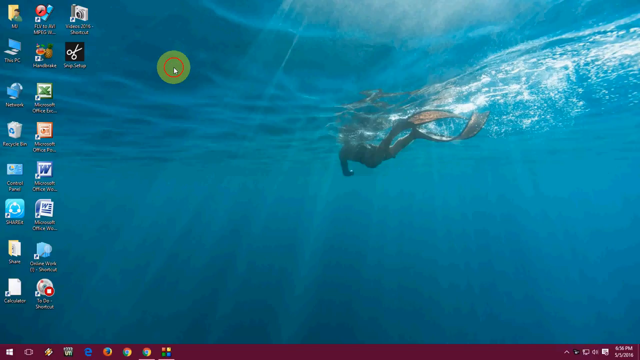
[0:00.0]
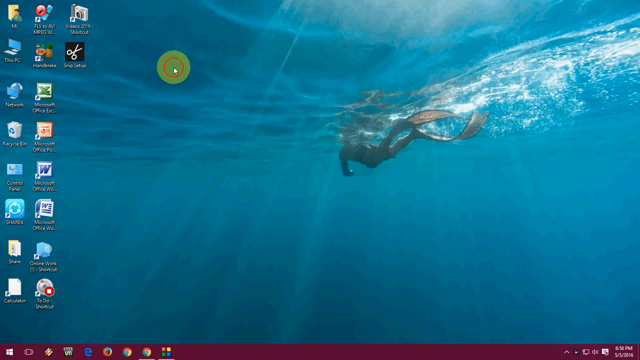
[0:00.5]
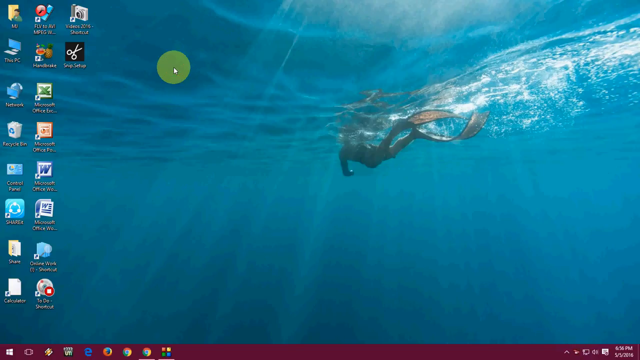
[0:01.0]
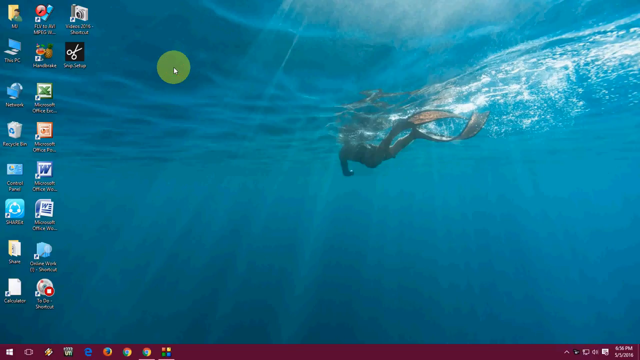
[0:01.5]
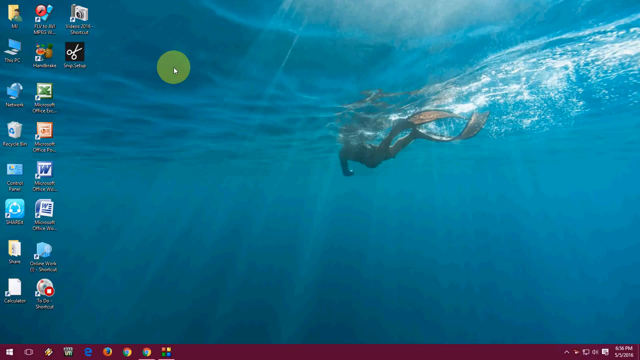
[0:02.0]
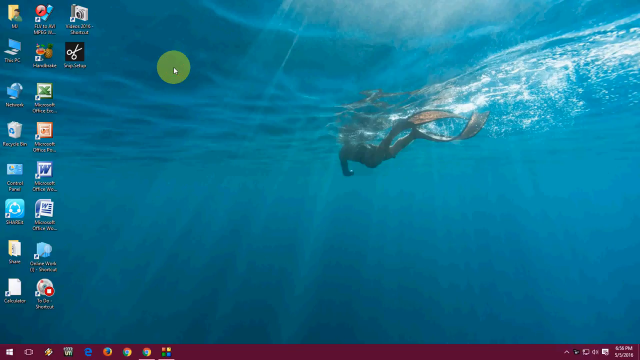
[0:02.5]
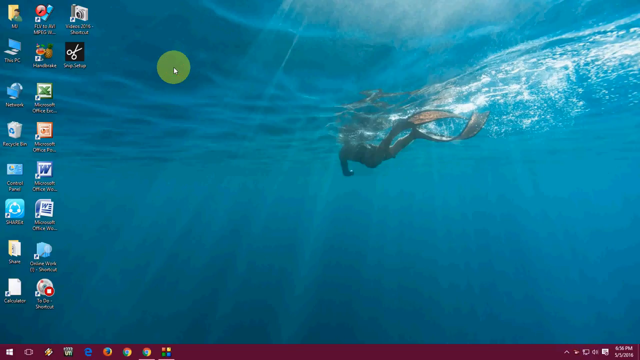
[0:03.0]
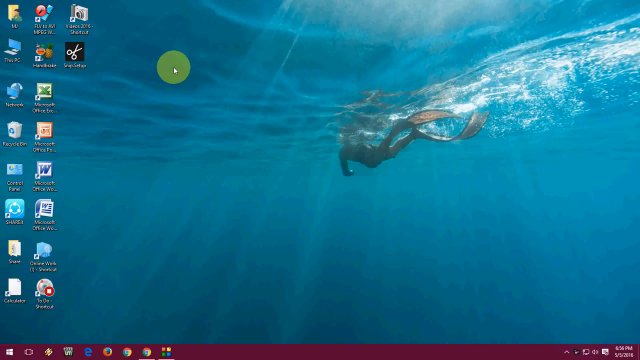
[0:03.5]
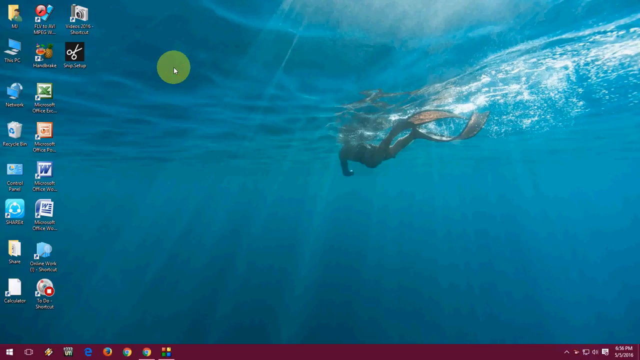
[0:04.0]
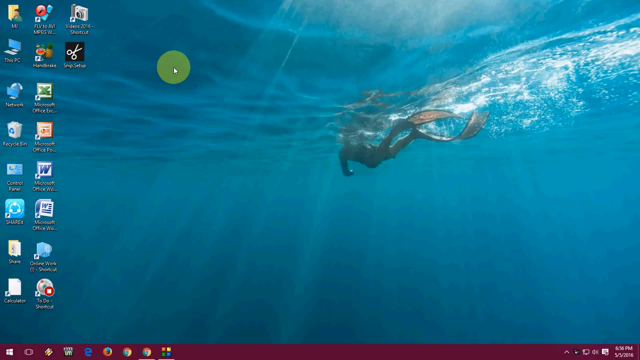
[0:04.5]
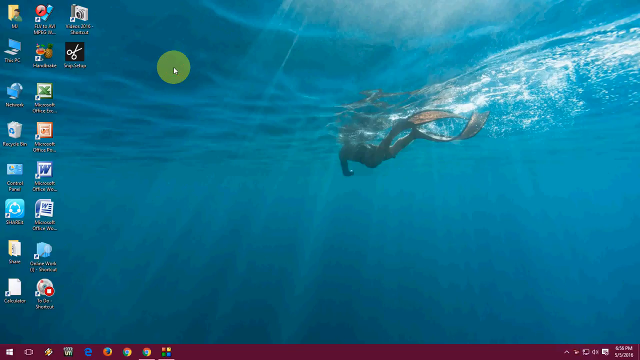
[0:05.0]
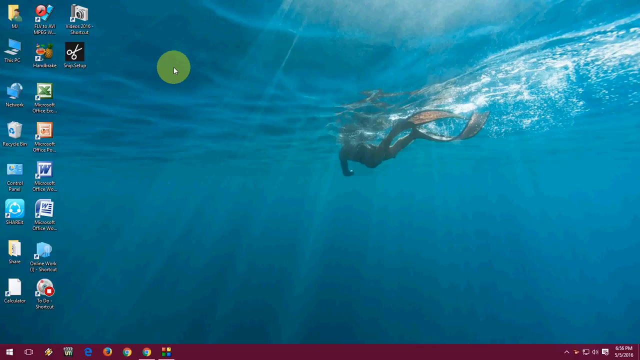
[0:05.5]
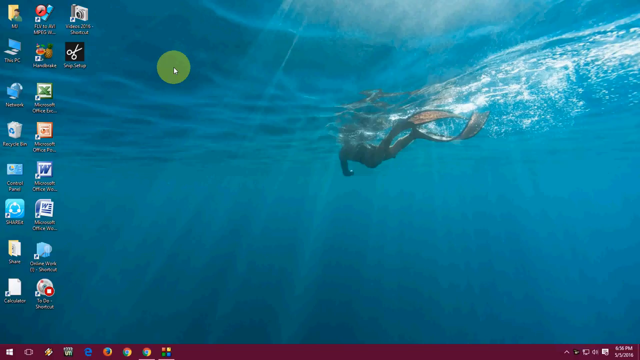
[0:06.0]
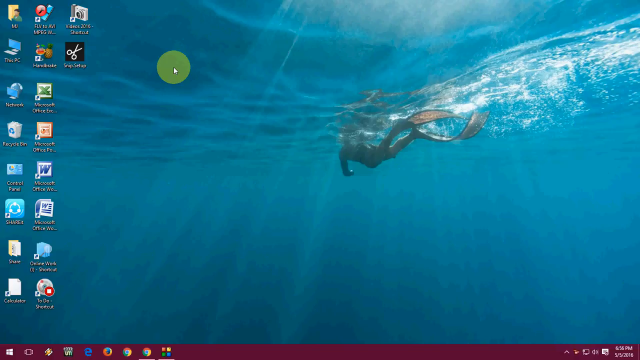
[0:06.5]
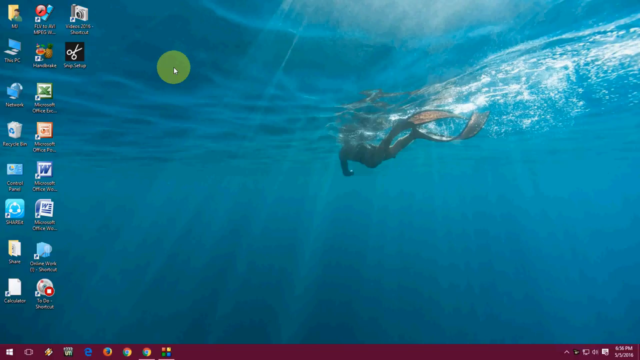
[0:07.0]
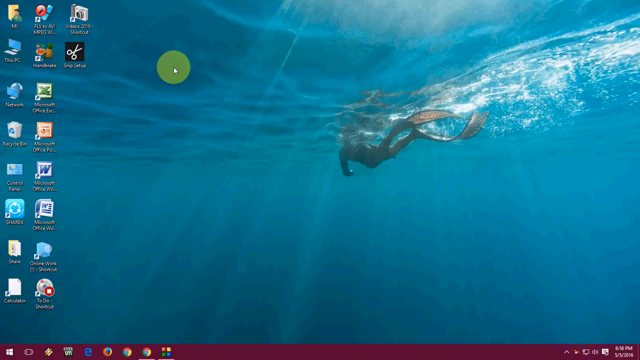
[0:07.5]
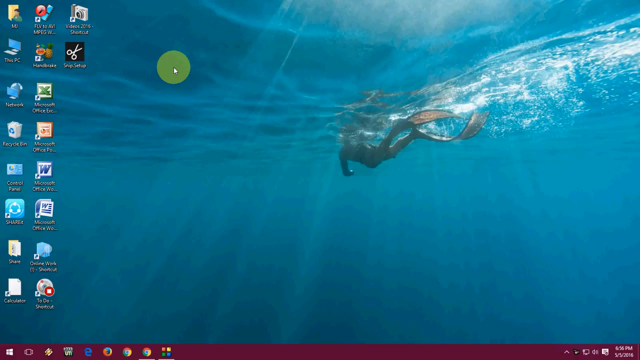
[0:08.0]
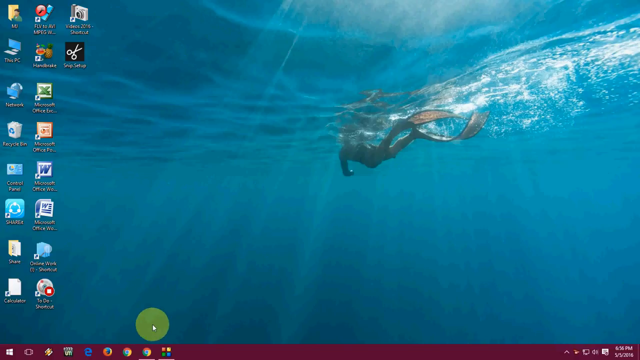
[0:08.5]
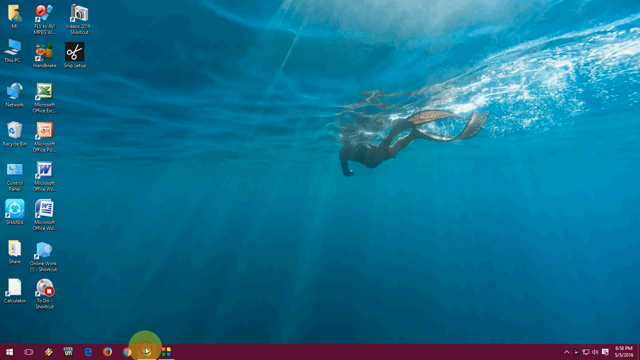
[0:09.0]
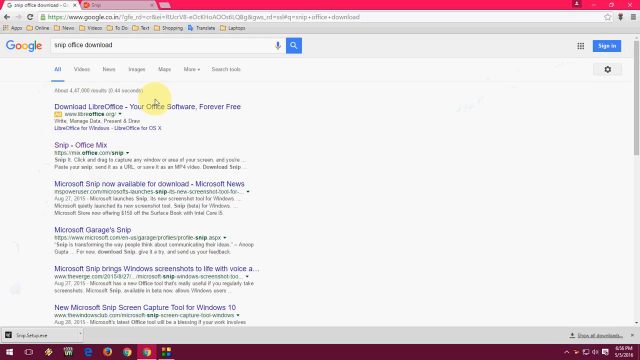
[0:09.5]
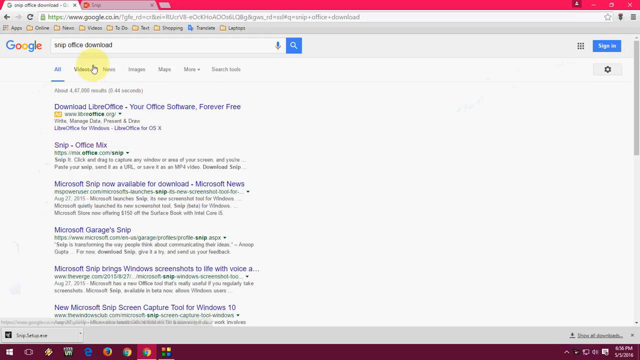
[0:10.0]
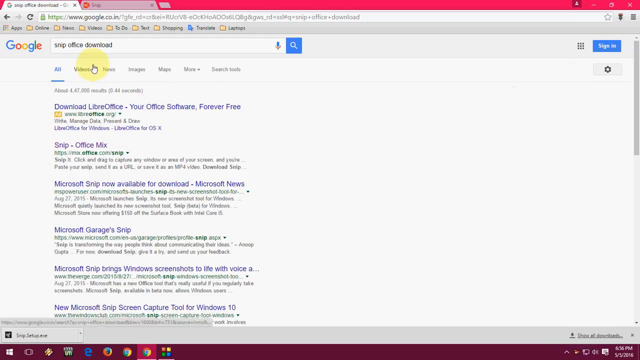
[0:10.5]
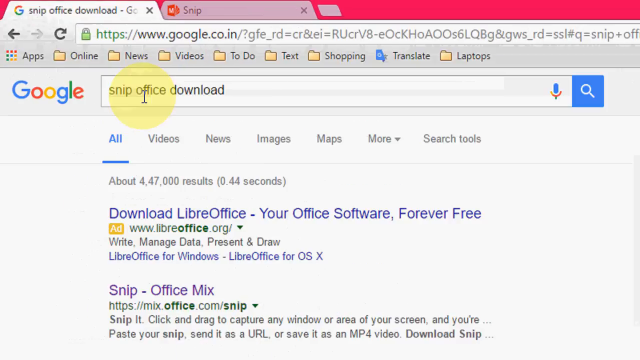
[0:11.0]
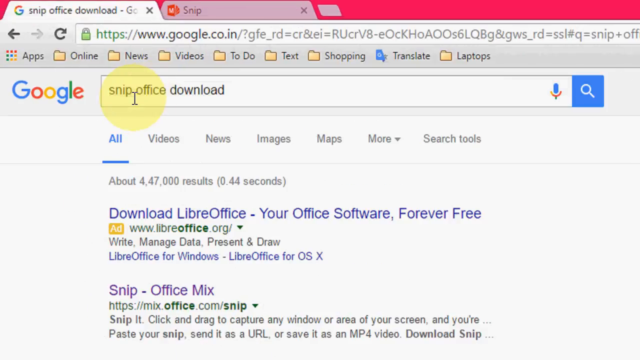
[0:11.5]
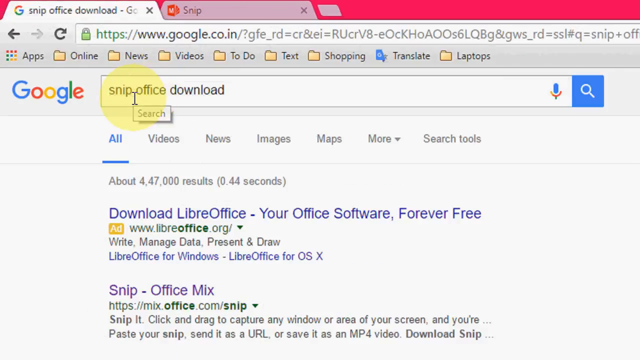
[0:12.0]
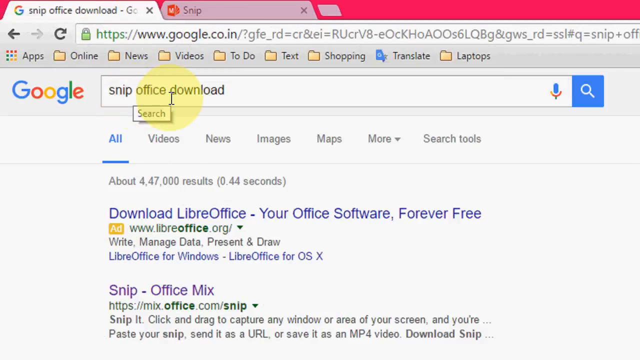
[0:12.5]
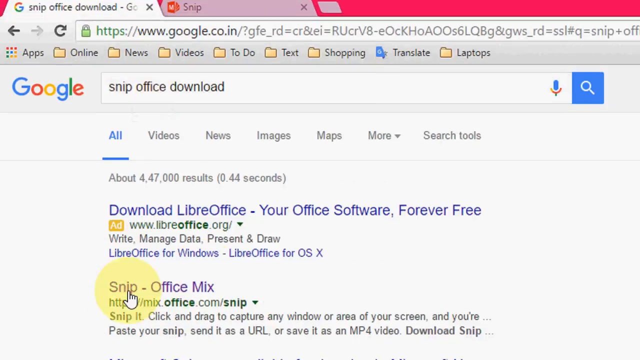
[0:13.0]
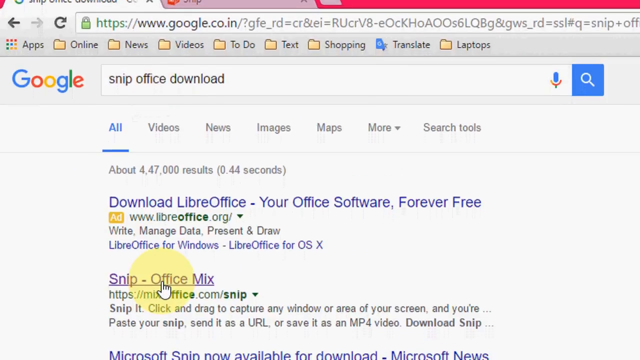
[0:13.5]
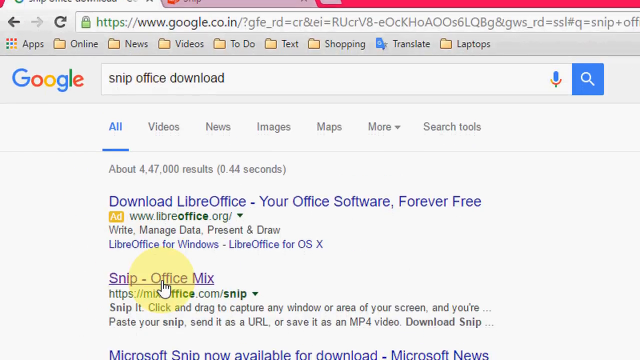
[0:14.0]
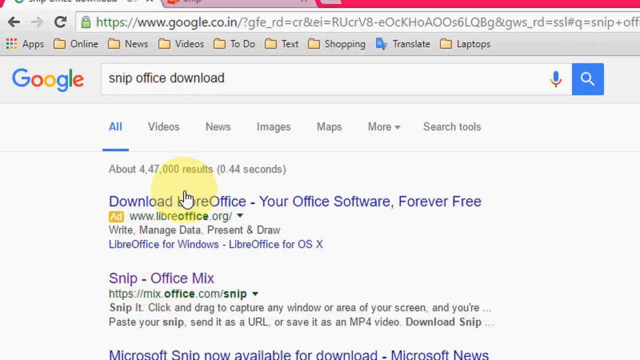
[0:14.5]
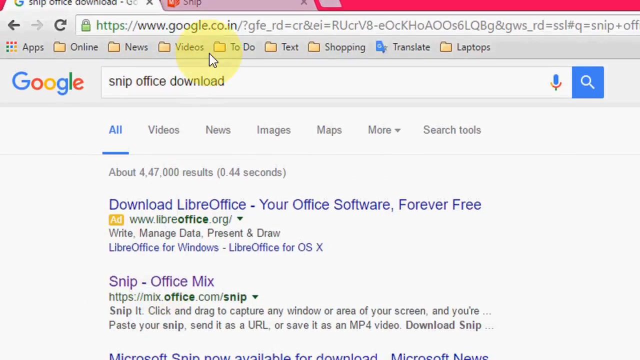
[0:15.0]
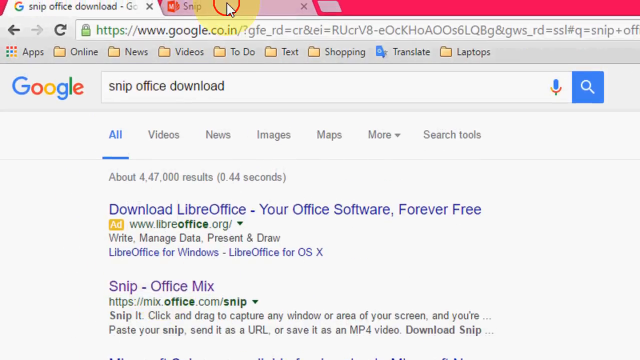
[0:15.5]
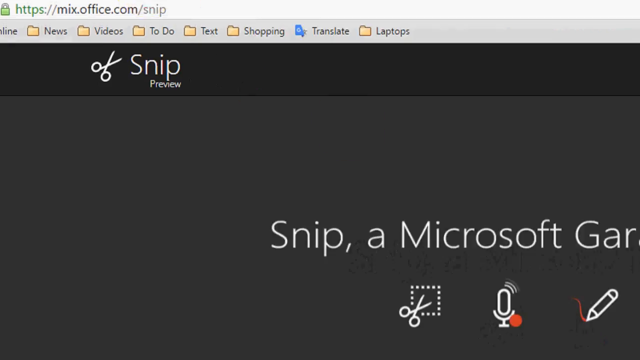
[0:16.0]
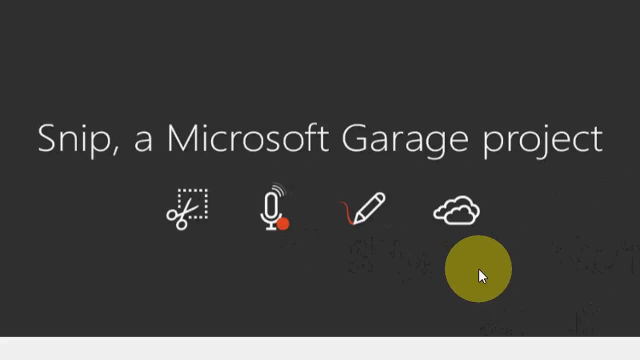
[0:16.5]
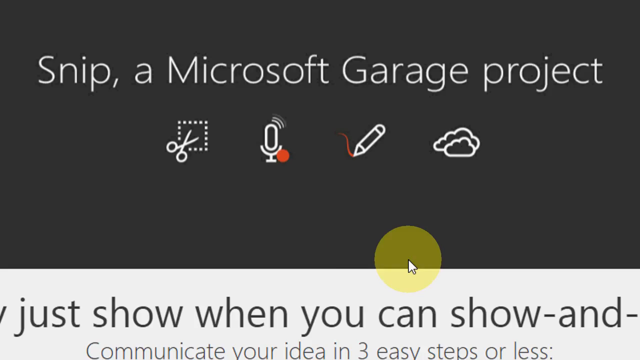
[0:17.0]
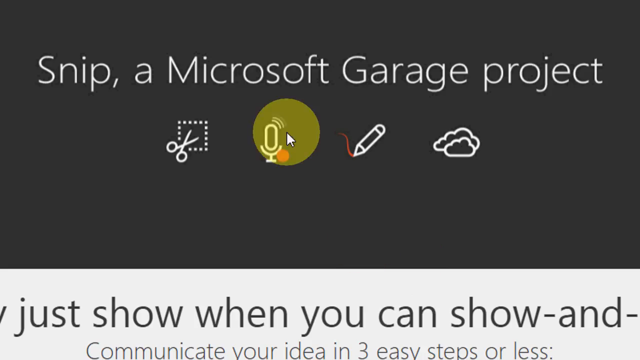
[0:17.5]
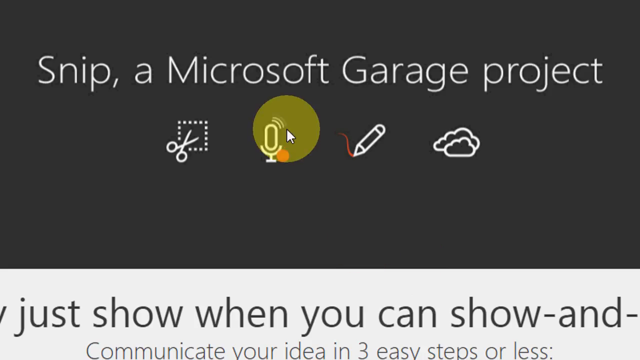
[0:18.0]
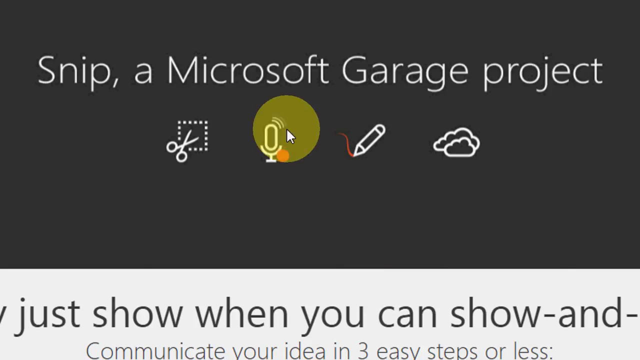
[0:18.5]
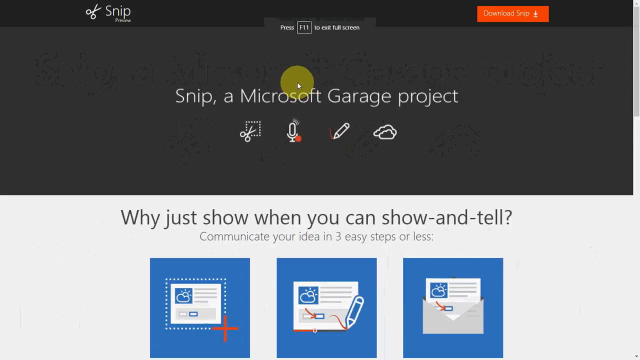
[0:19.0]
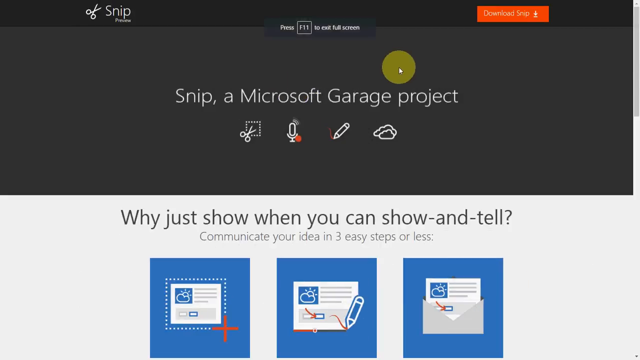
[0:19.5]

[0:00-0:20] The screen of an operating system that is almost certainly Windows is shown; judging by the wallpaper and icons, it appears to be Windows 10. Several icons are aligned in the work area in two complete rows, with two more icons almost overlapping. The video demonstrates the icons in the work area. The mouse has a function activated that shows where it clicks, with a circle around the cursor.